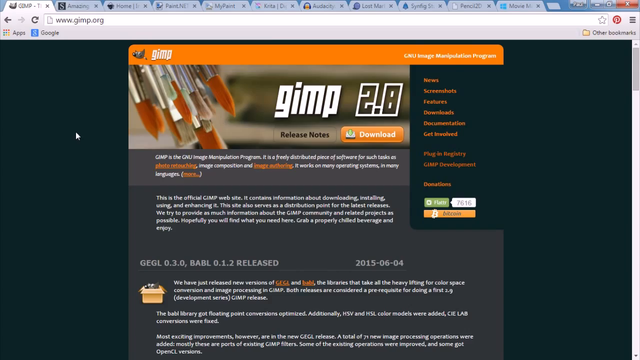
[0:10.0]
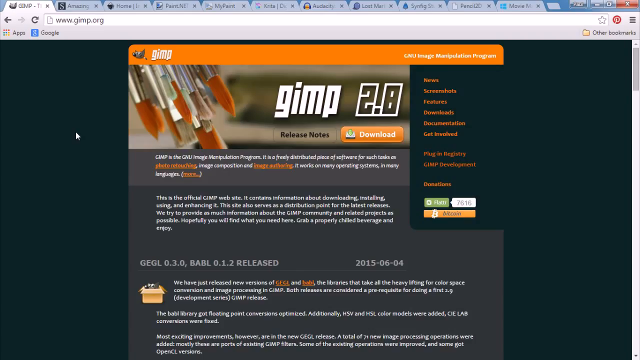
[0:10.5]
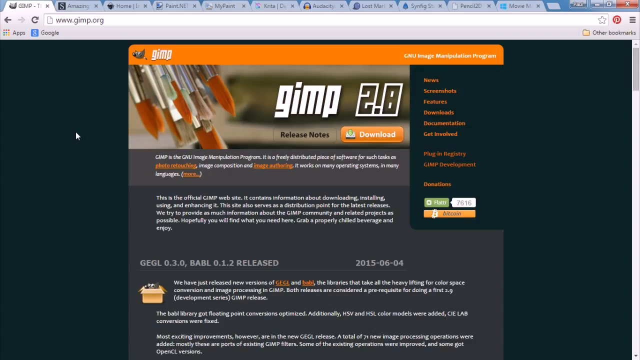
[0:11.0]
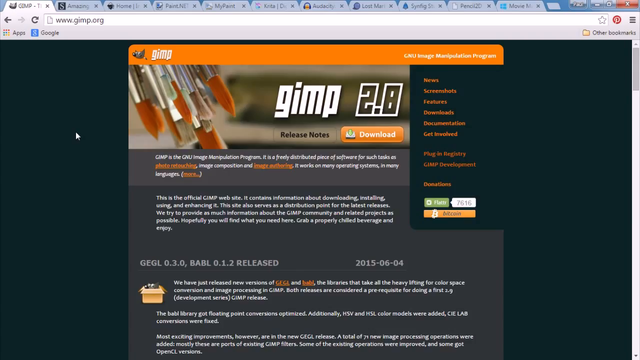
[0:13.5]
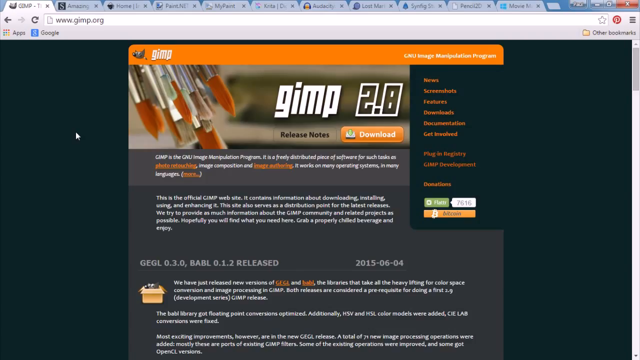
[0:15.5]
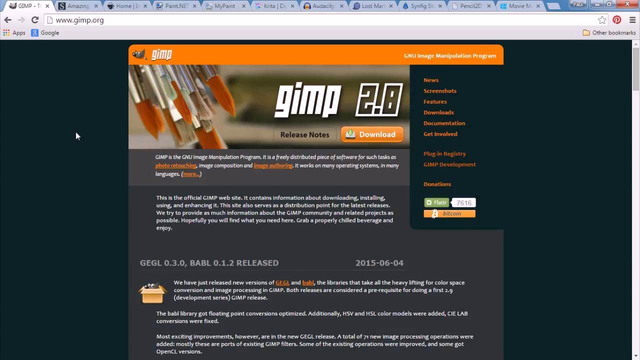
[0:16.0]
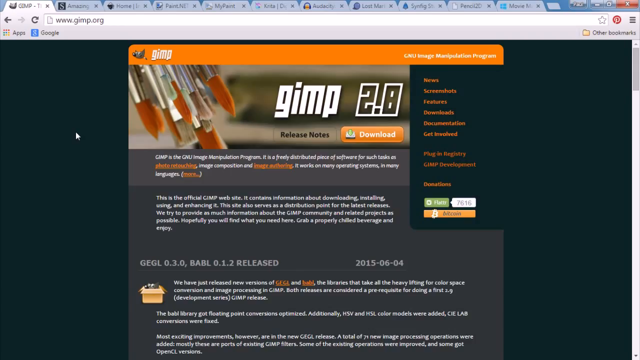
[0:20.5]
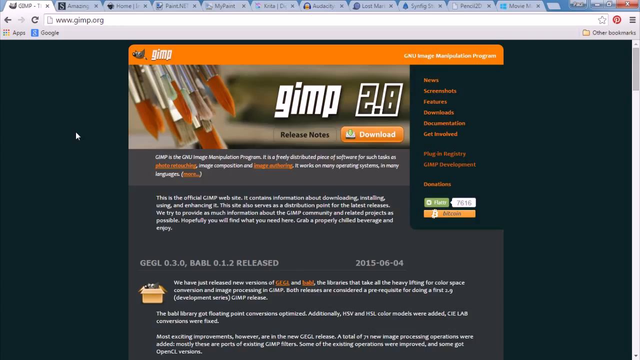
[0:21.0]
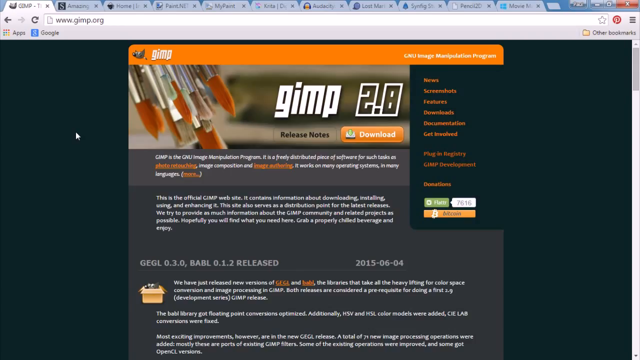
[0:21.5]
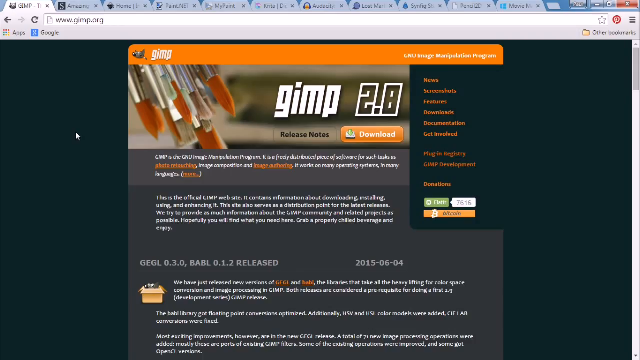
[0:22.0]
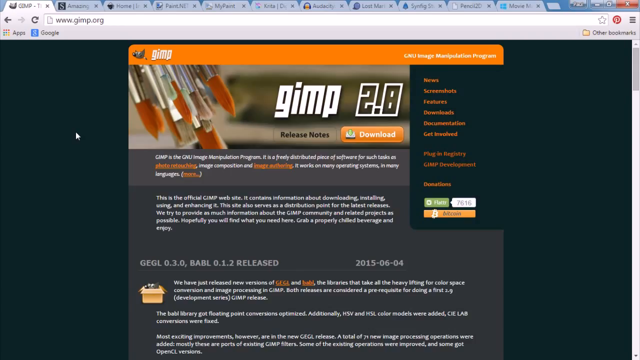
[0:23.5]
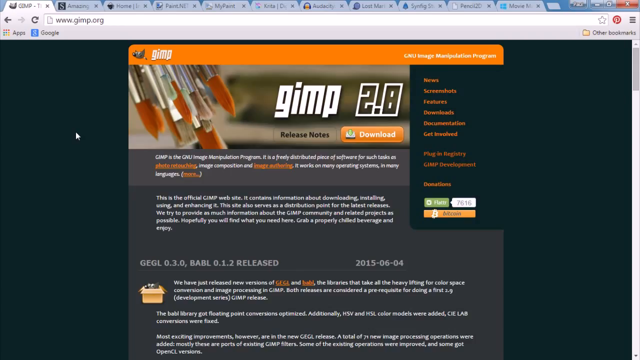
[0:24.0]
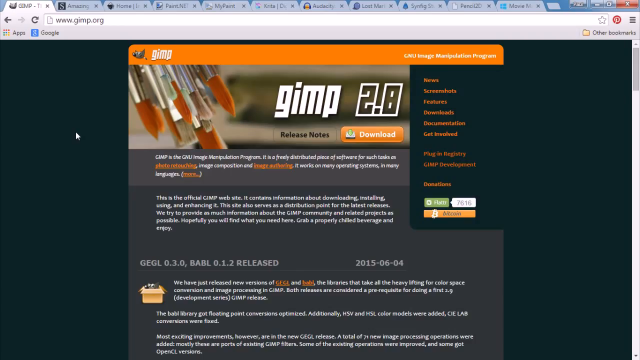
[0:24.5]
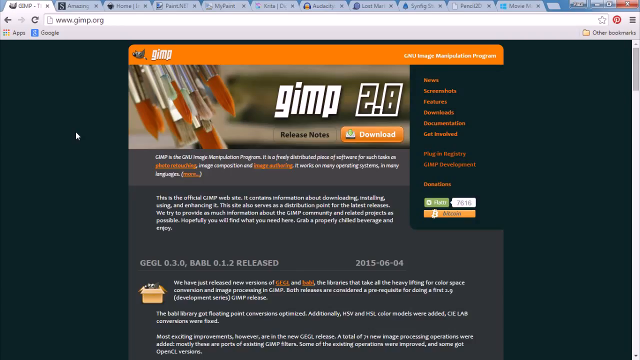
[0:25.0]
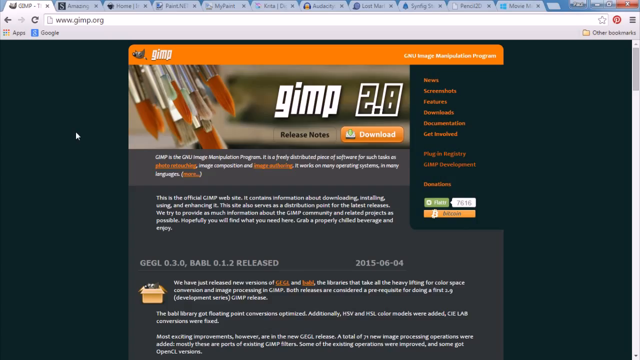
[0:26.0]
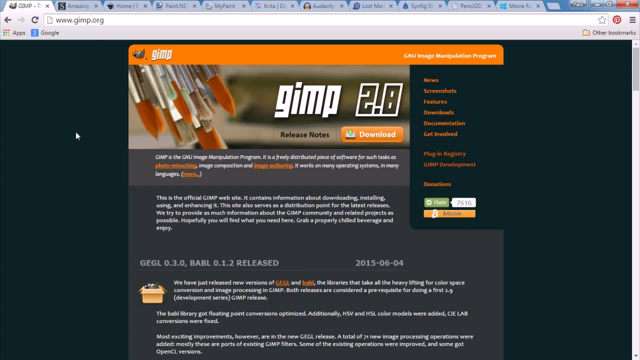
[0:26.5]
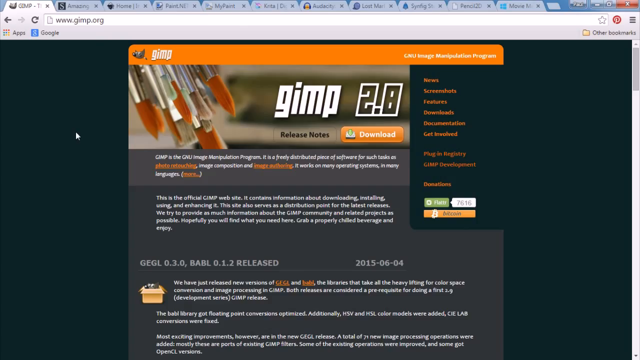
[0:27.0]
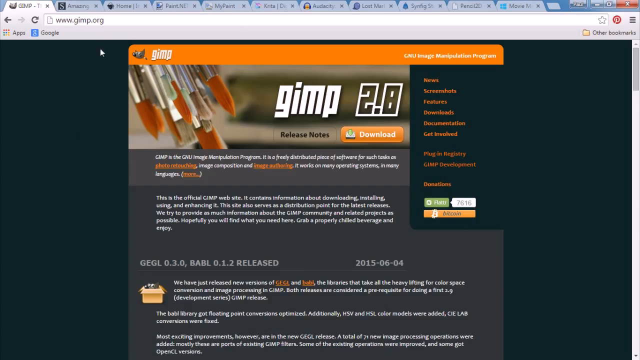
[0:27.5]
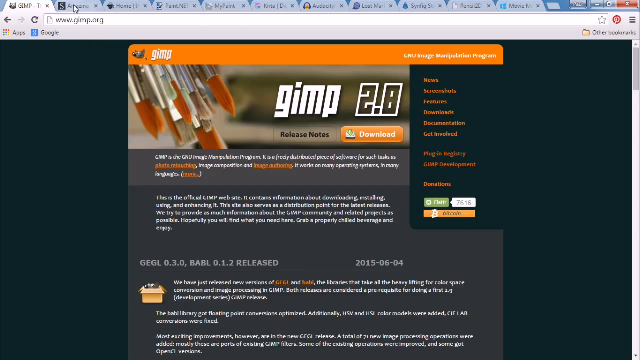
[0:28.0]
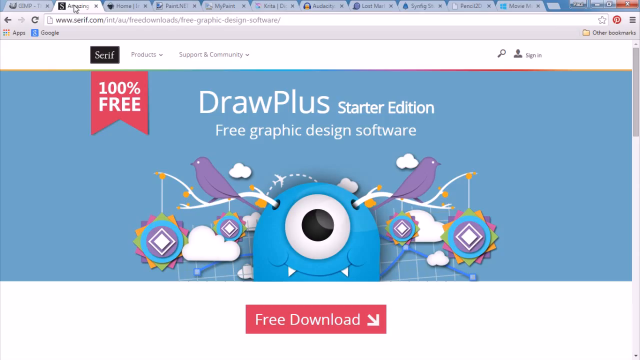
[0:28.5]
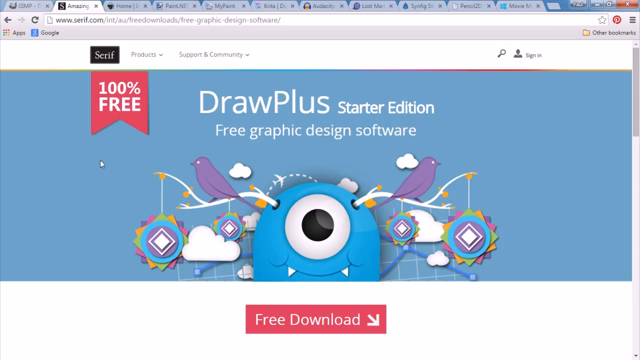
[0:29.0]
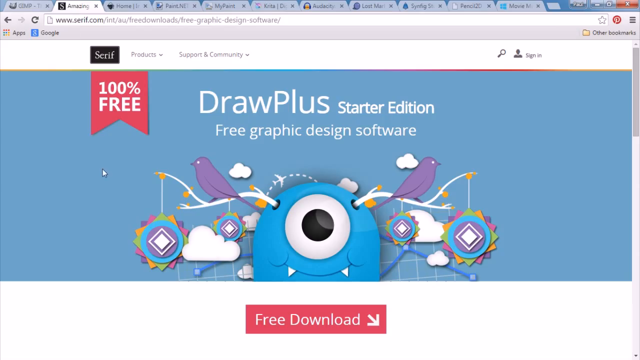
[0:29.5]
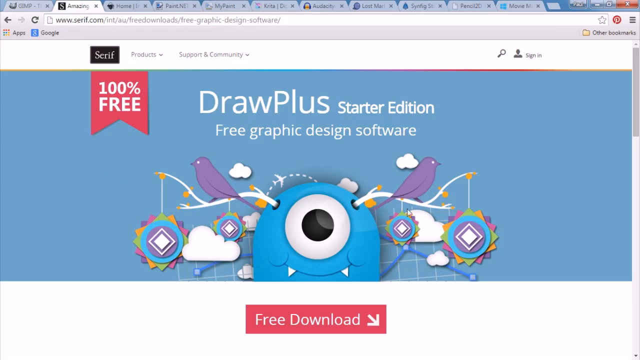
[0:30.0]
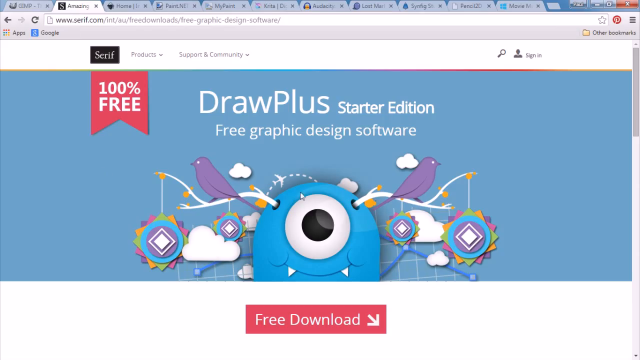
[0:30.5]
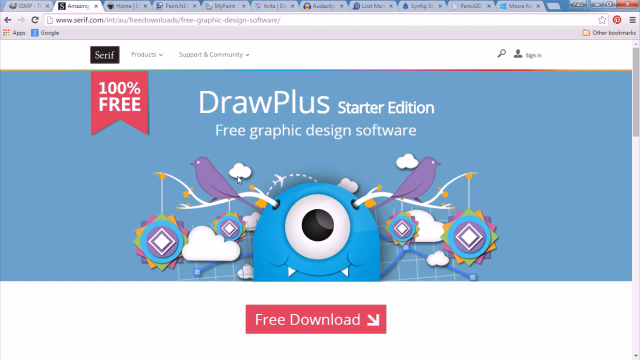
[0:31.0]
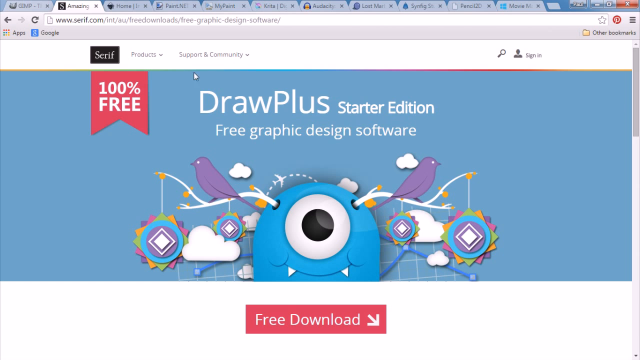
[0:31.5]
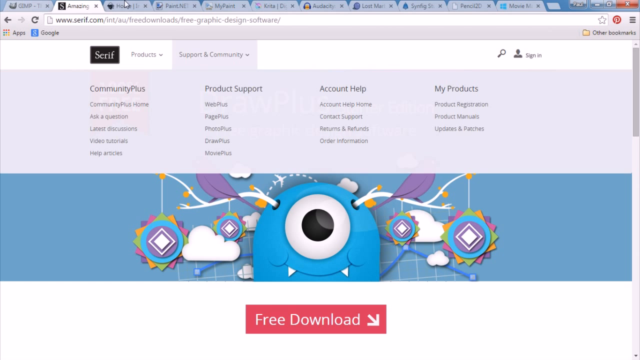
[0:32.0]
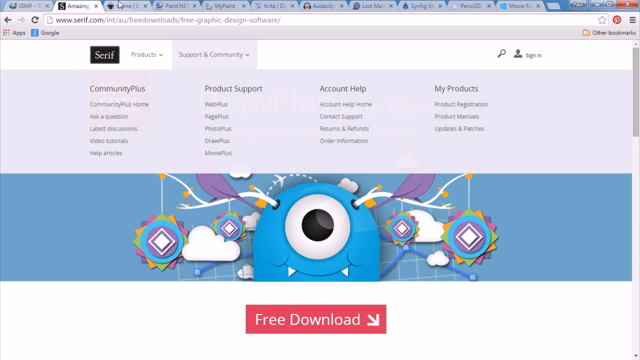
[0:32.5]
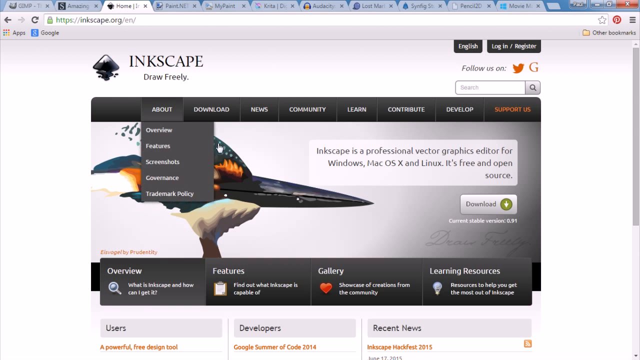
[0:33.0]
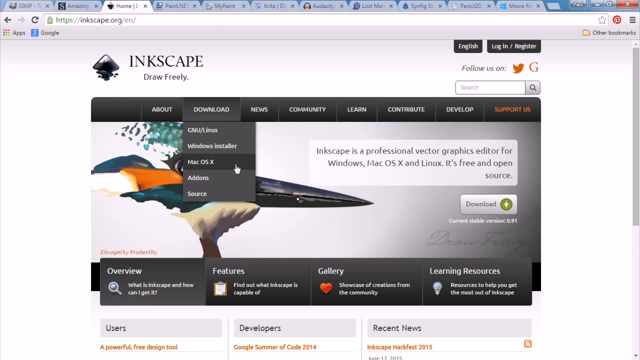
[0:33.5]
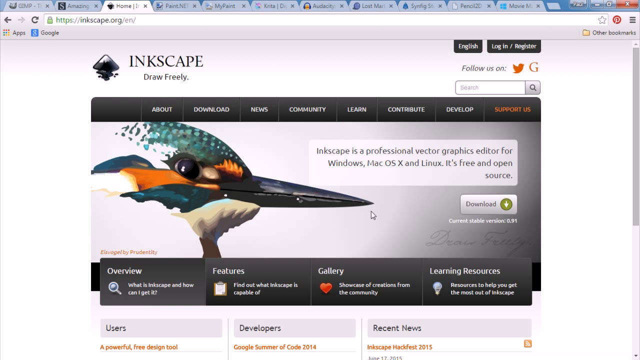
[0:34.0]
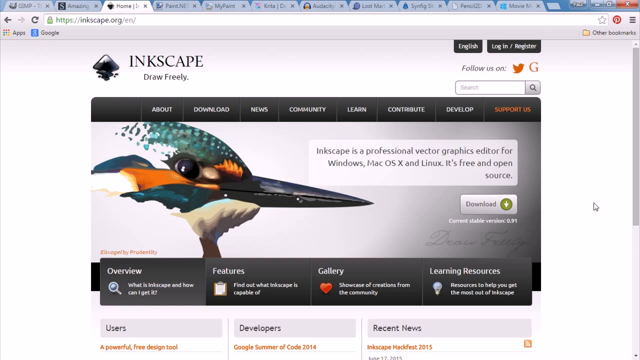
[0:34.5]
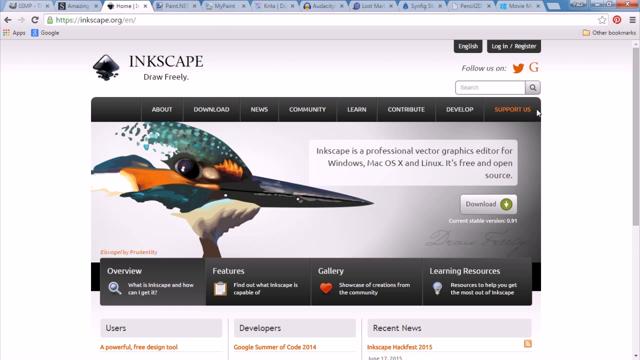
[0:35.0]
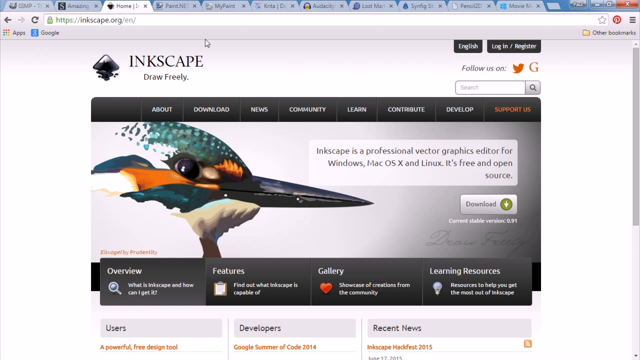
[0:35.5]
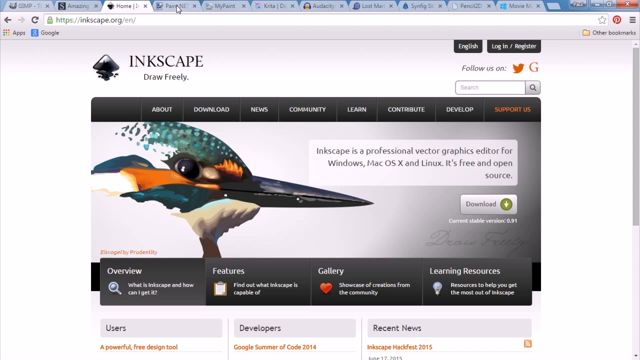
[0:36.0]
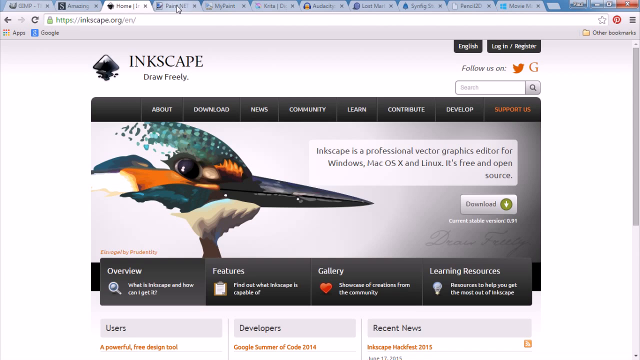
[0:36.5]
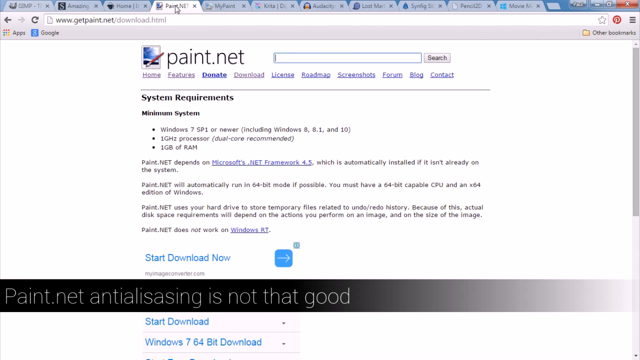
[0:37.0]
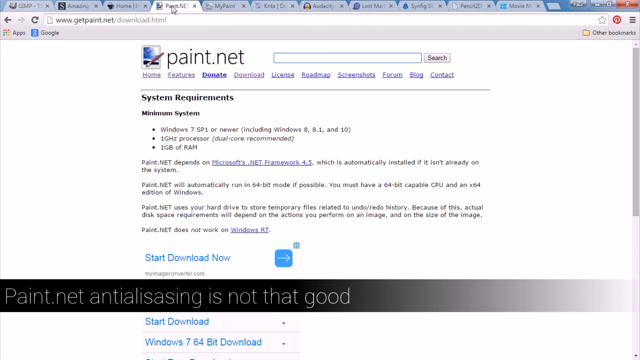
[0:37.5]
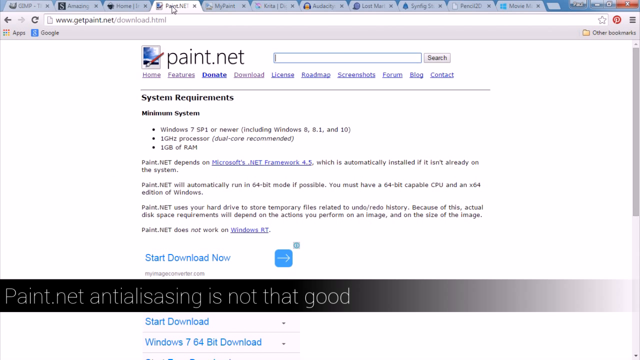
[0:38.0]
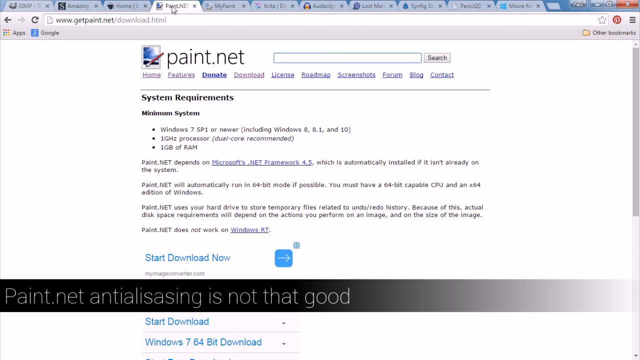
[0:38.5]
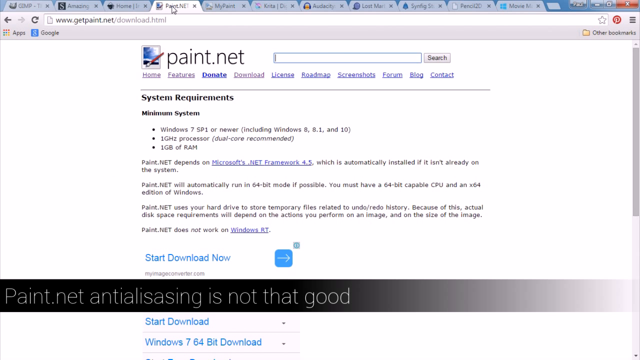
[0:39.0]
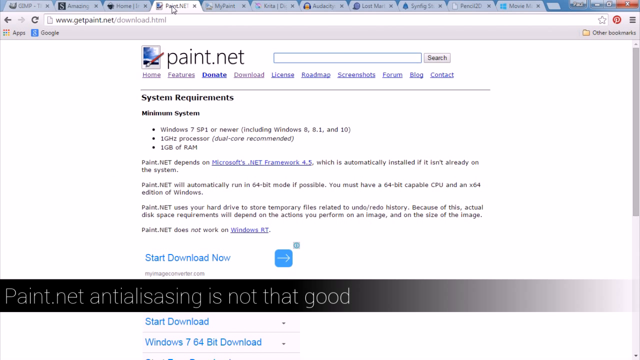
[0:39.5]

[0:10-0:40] The browser stays on the first tab, www.gimp.org, with 11 tabs open. A Pinterest bookmark in the upper right shows a red circle with a white P. Below the back arrow are "apps," "Google" and "GIMP 2.8." A white mouse pointer is on the left side of the page. The page text is very small, but parts are readable, including "This is the official GIMP website," "this site also serves as a distribution point for the latest releases," and "we try to add as much information about the GIMP community and related properties as possible. Hopefully you will find what you need." The mouse then moves up to the second tab, labeled "draw plus," then to the third, "inkscape draw freely," and then to the fourth, "paint.net."